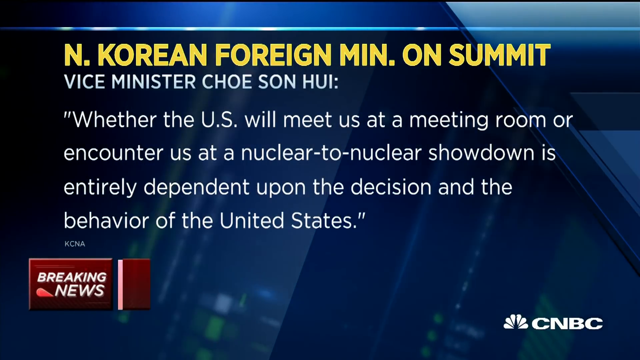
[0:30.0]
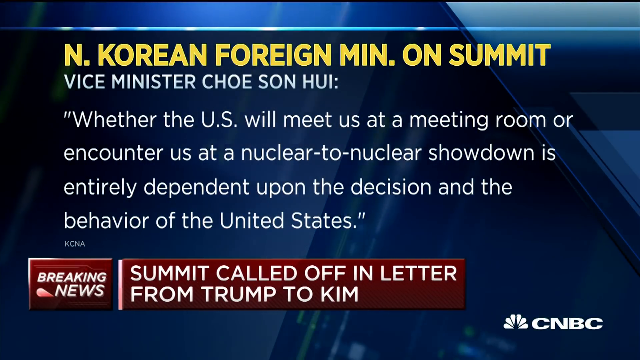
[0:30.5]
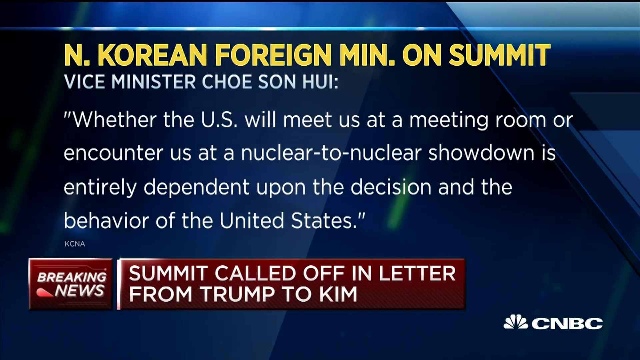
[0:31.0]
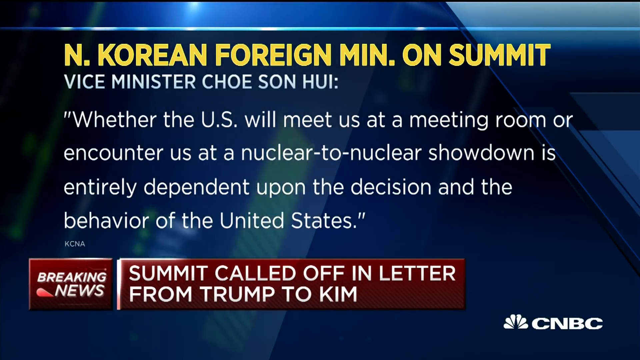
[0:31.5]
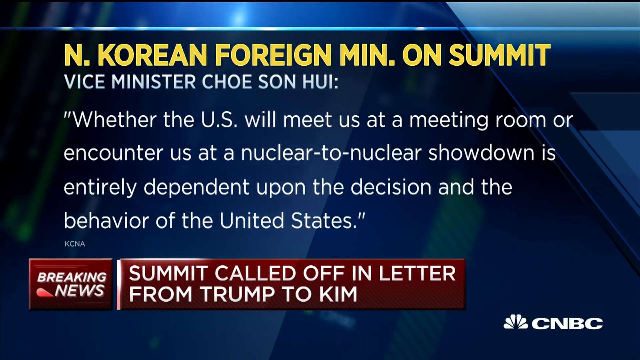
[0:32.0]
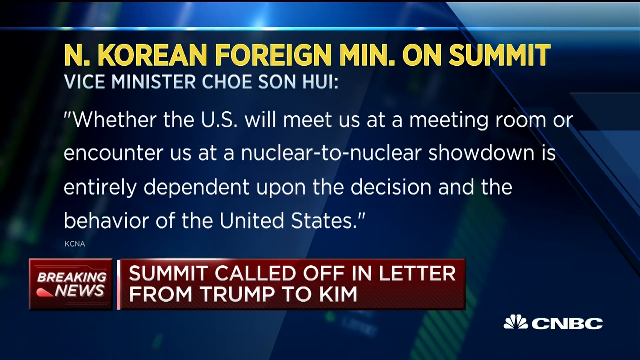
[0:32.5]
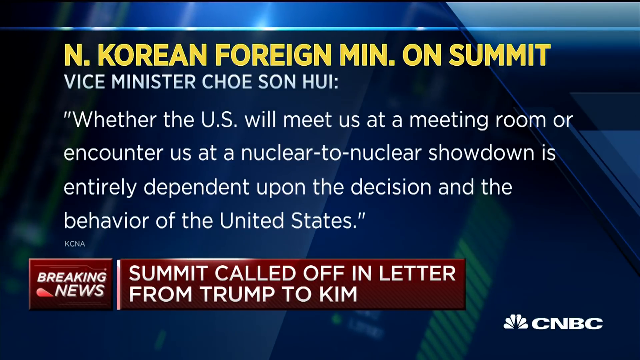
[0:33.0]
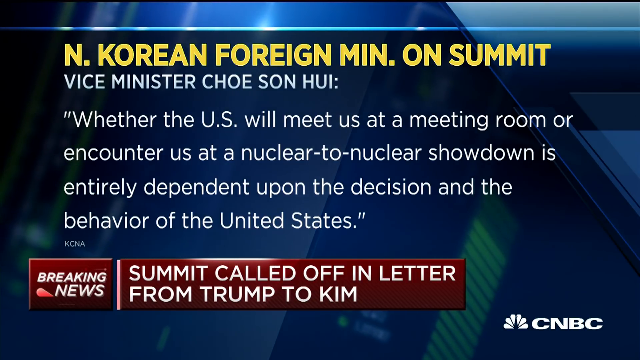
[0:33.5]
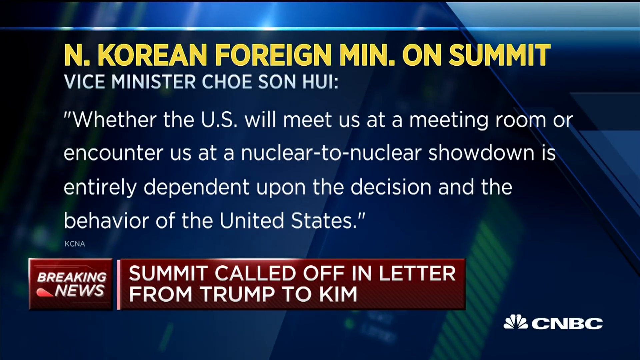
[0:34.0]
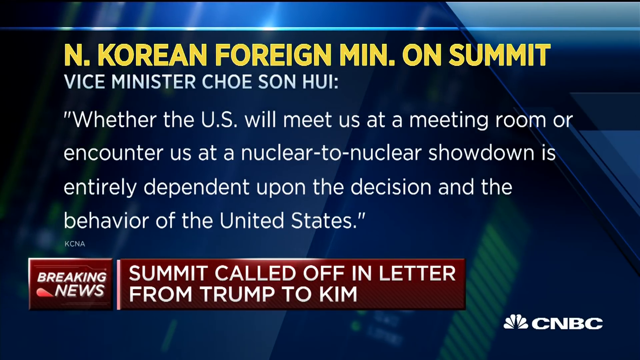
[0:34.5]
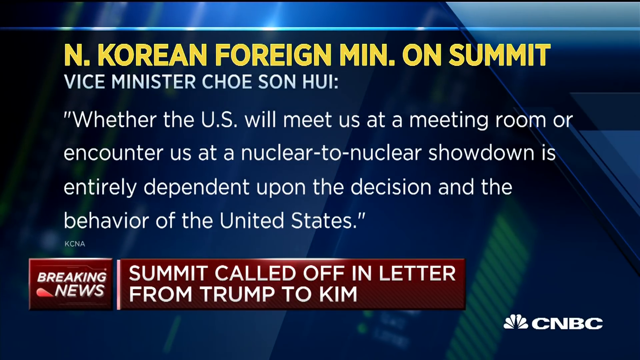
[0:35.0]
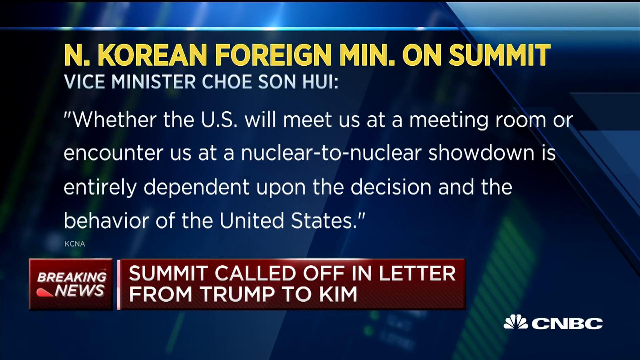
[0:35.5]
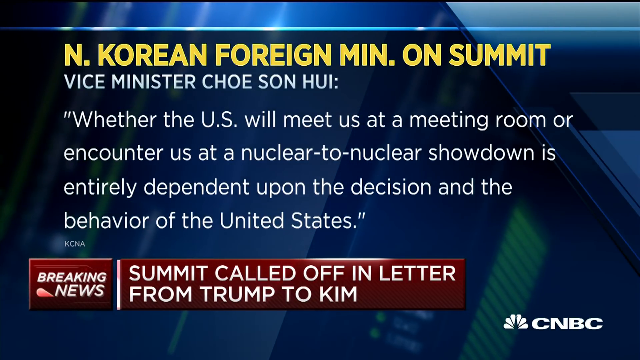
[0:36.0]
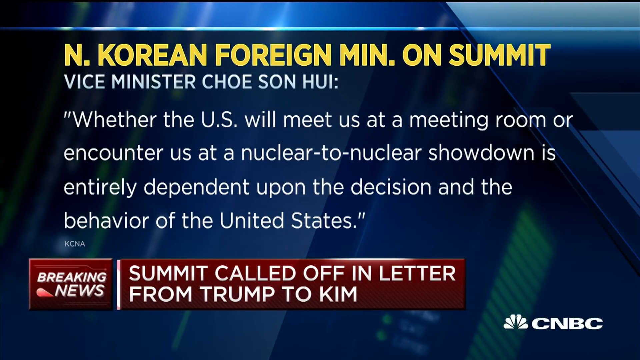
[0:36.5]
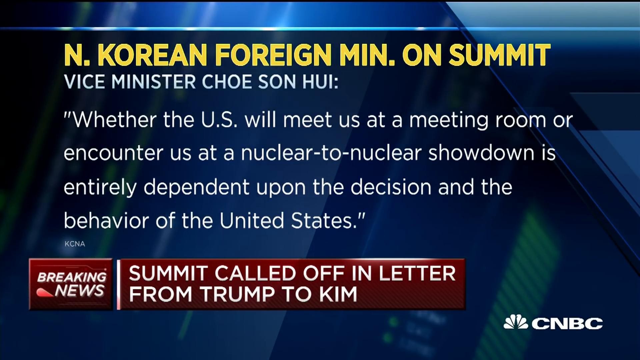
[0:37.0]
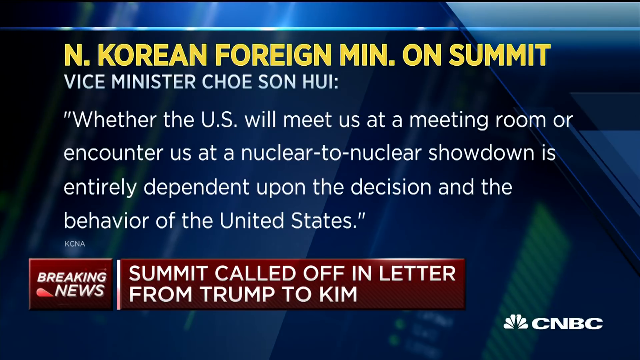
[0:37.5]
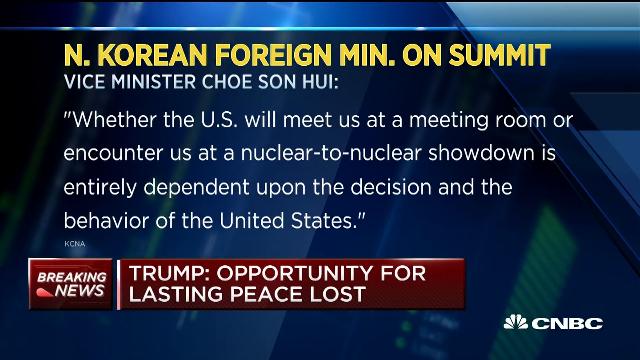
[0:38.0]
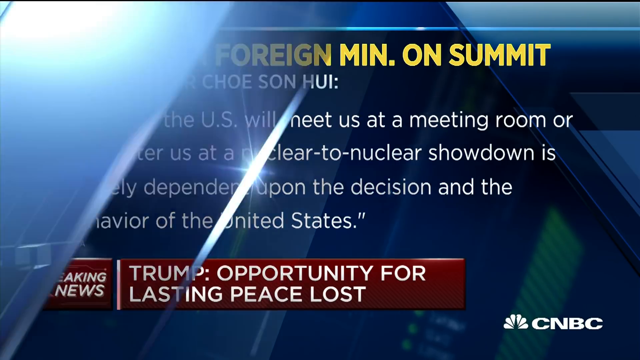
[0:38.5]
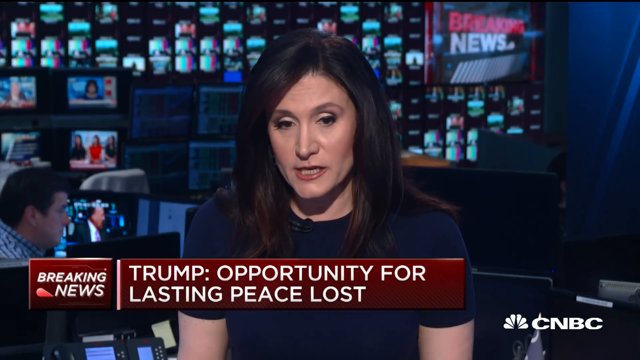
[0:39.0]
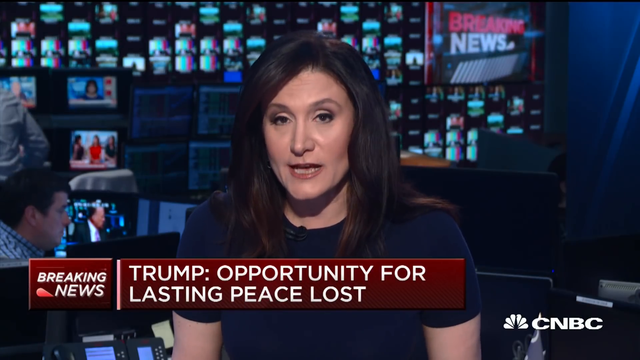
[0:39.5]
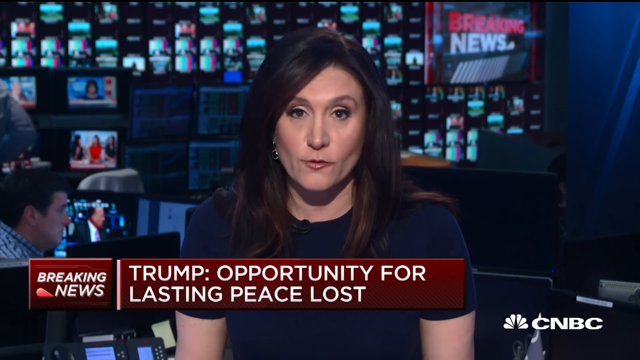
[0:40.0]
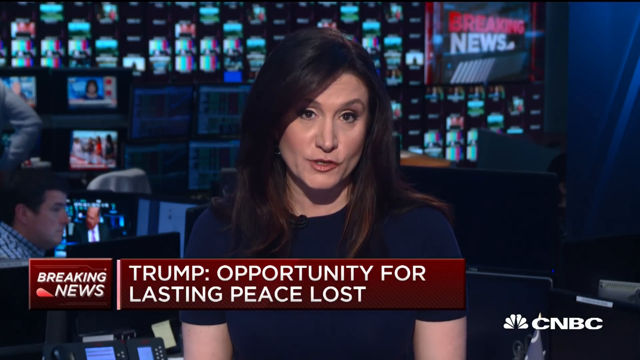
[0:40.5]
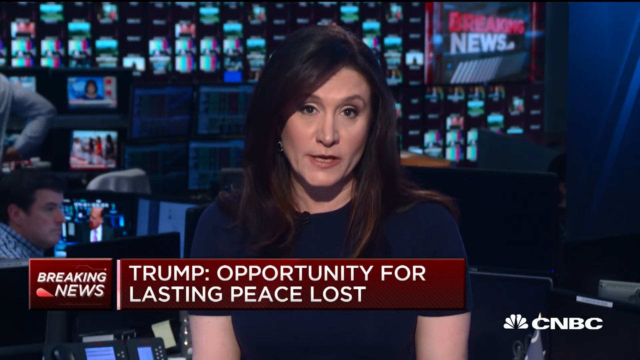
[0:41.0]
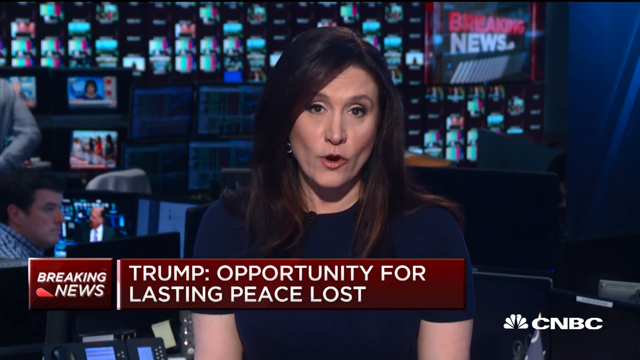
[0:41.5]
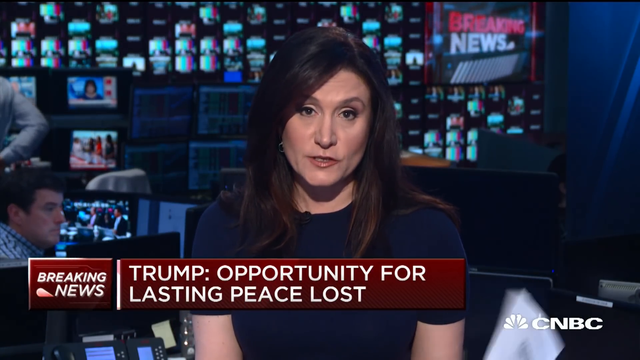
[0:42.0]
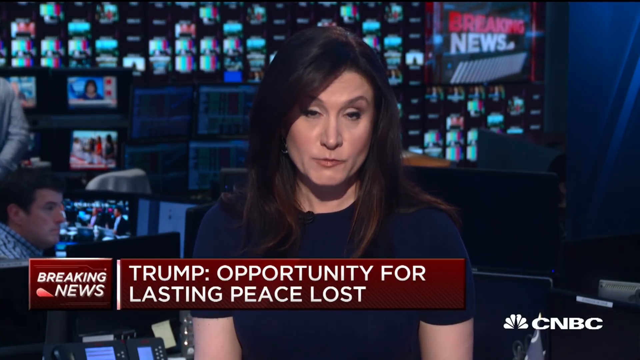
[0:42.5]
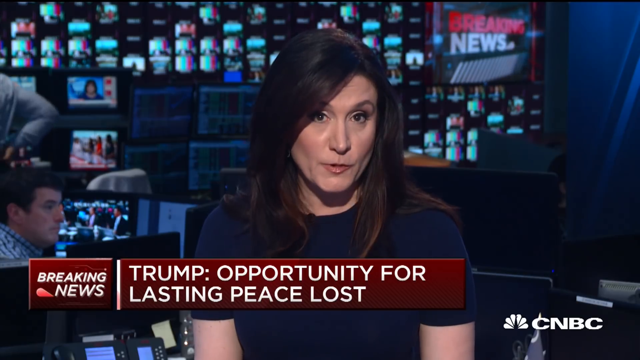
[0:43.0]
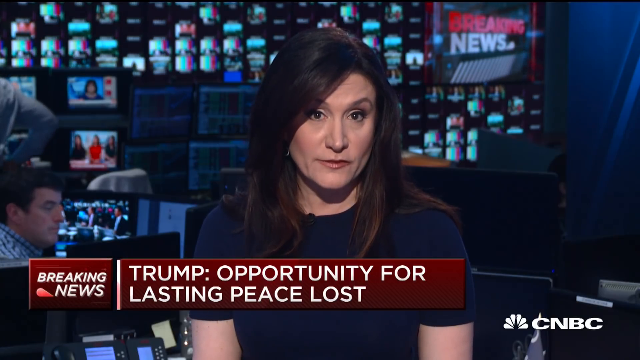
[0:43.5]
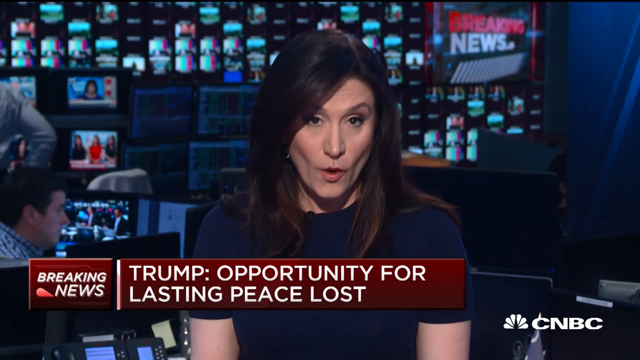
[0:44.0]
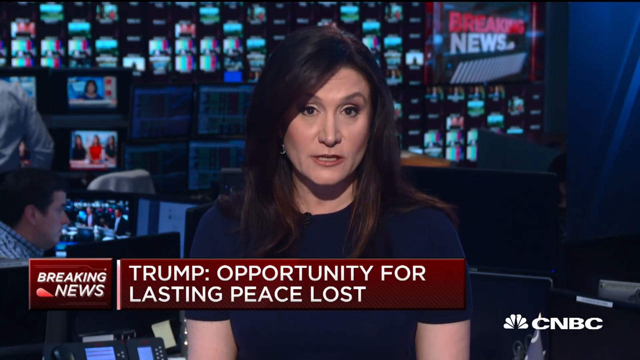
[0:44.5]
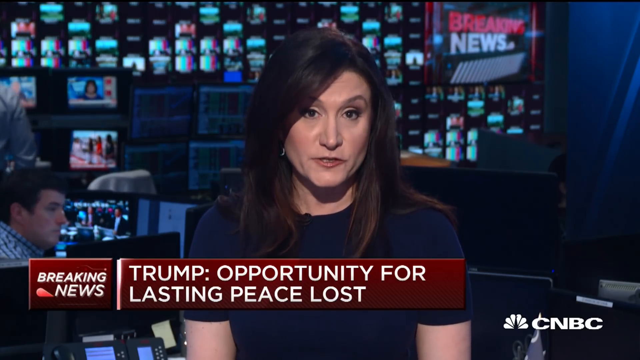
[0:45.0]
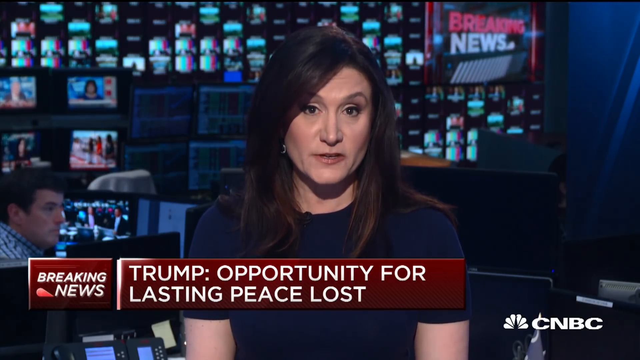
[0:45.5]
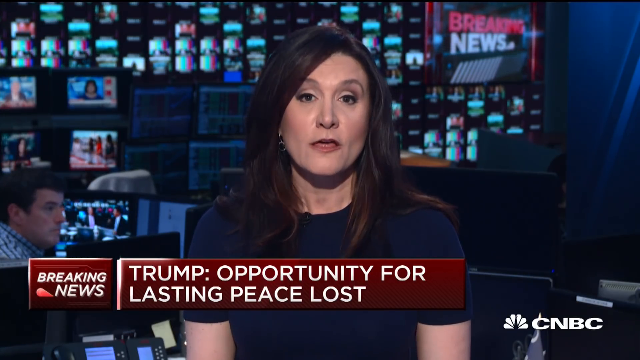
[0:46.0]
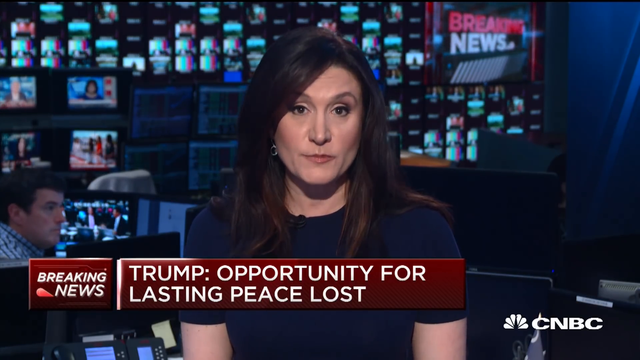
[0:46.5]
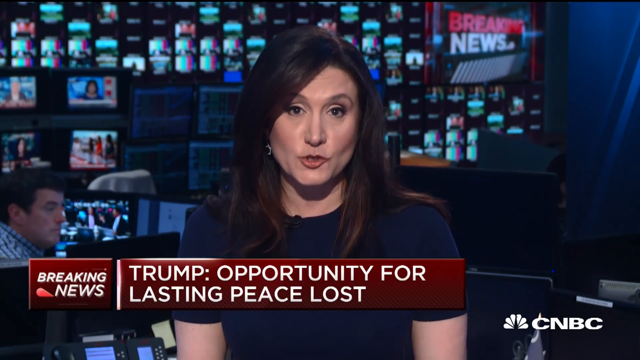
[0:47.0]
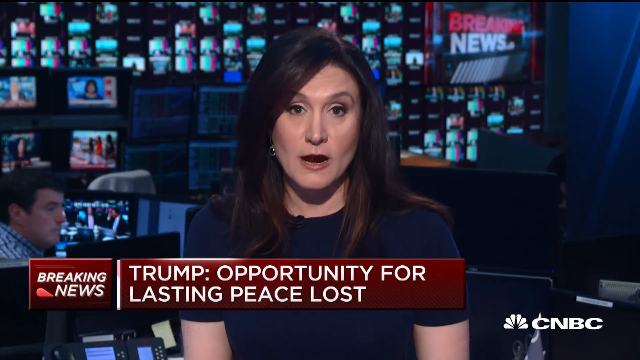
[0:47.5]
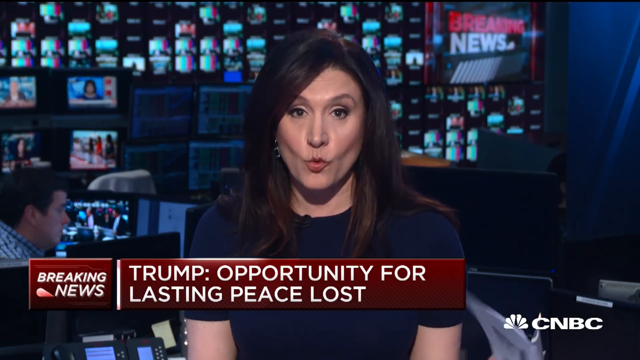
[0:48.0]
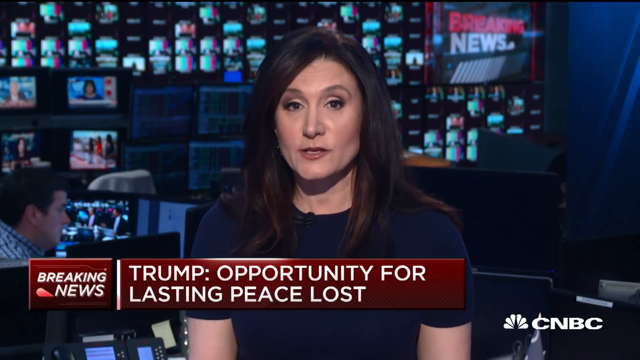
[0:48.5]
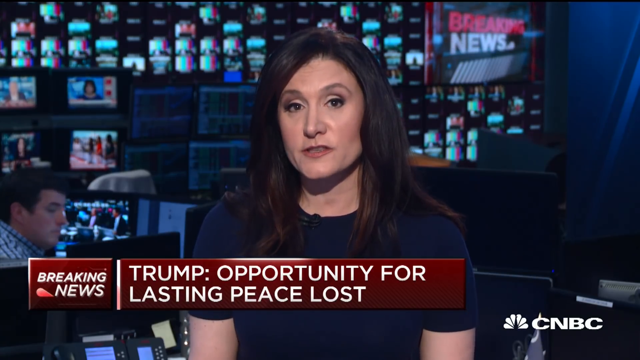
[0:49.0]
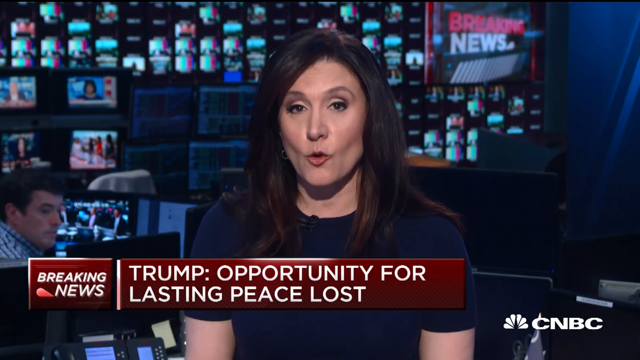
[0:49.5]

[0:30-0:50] A statement from North Korea's Vice Minister of Foreign Affairs, Chung Su-hung, is shown on screen, ending with the words "is entirely dependent upon the decision and the behavior of the United States." The statement looks like a defiant, bombastic statement. The female CNBC reporter speaks to the camera in the studio, with cameras and screens behind her.